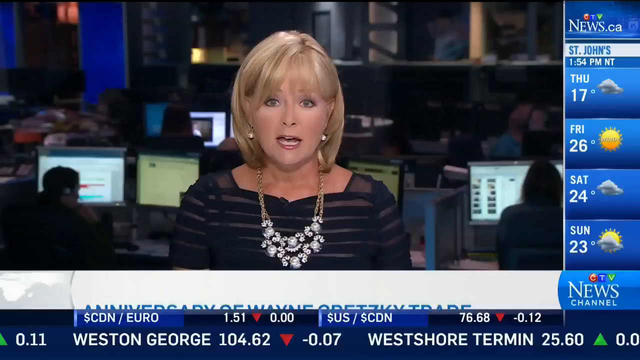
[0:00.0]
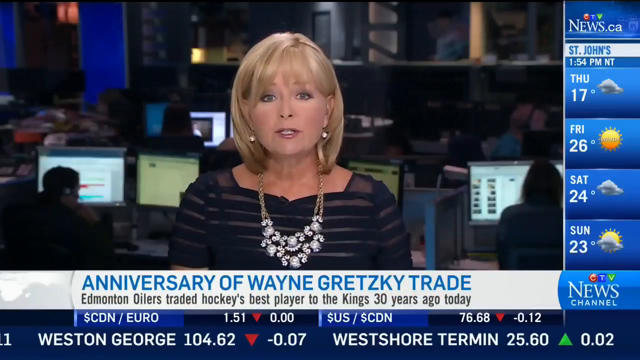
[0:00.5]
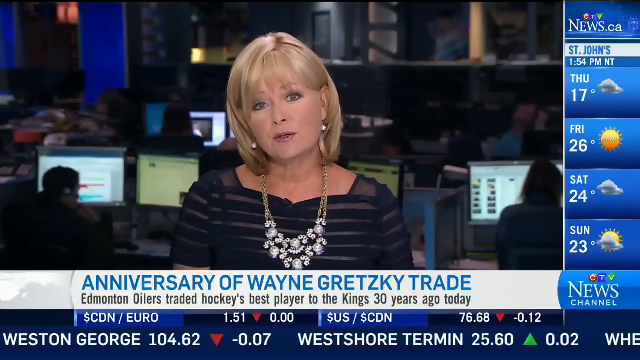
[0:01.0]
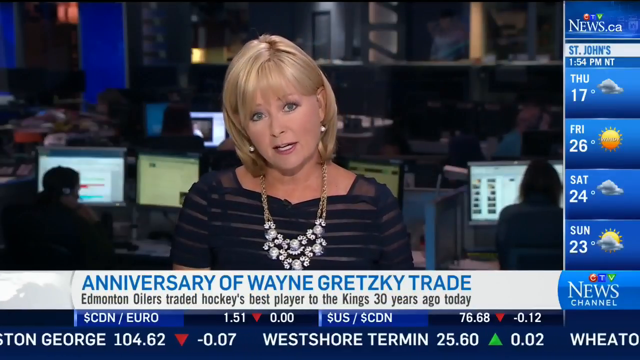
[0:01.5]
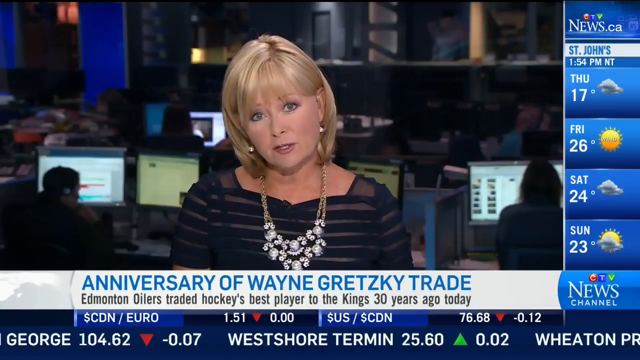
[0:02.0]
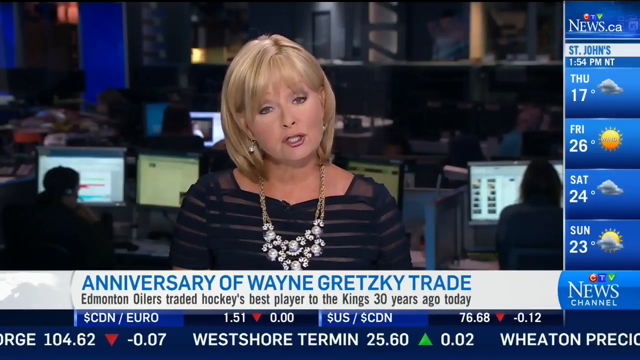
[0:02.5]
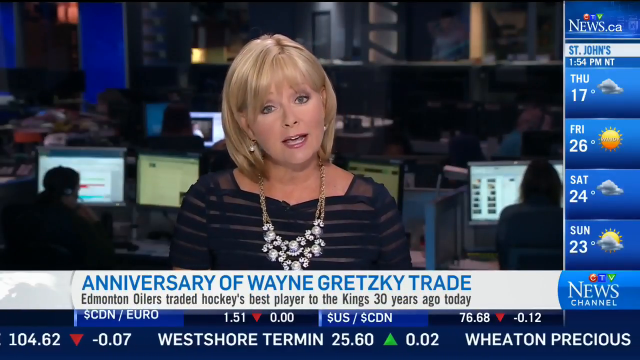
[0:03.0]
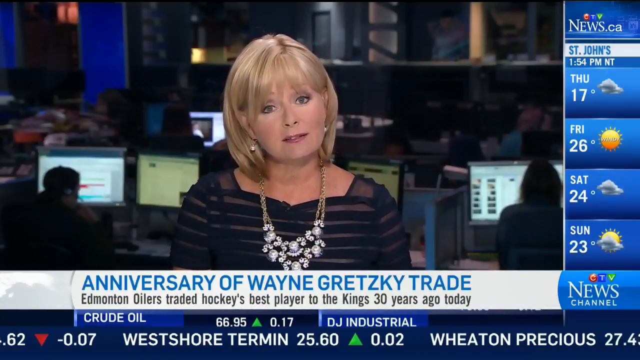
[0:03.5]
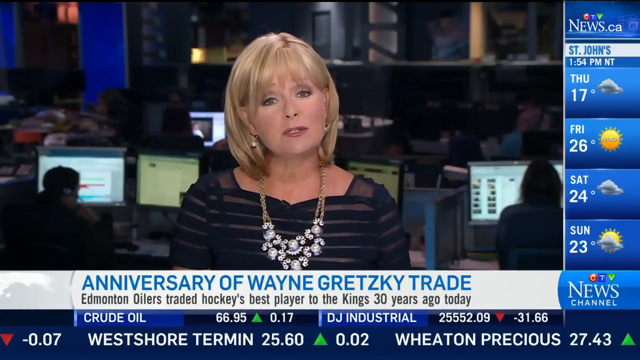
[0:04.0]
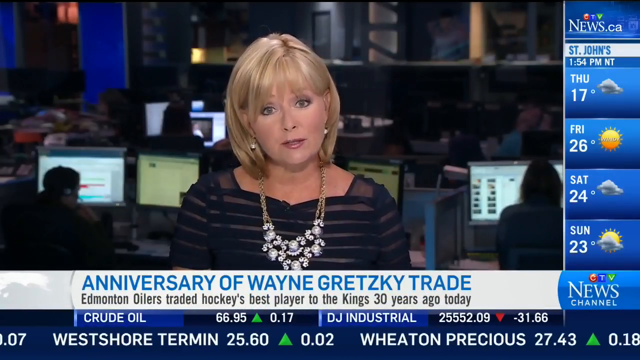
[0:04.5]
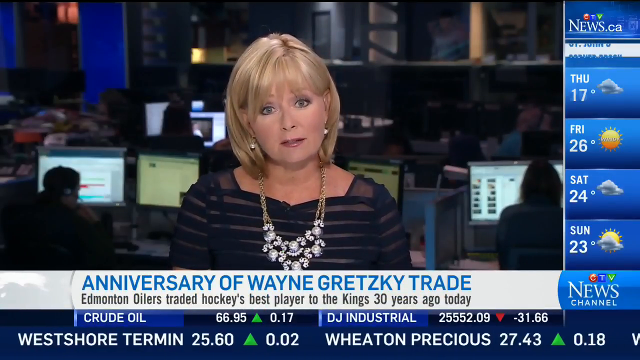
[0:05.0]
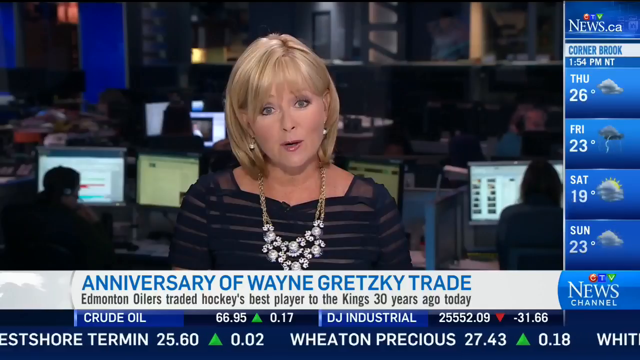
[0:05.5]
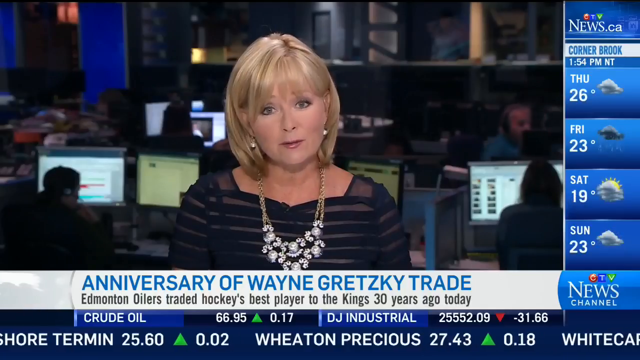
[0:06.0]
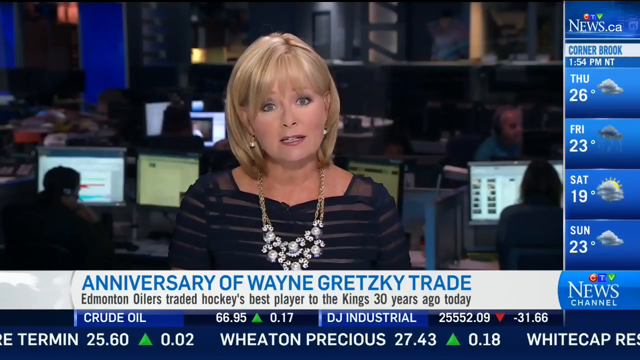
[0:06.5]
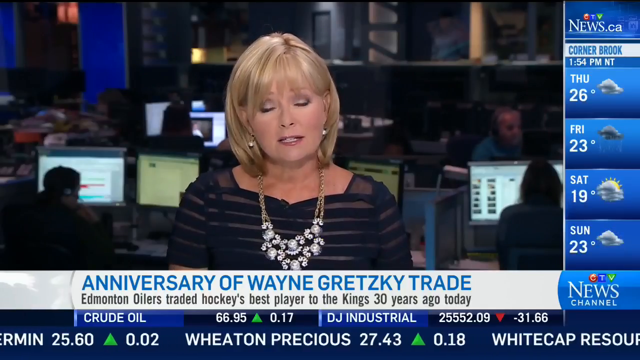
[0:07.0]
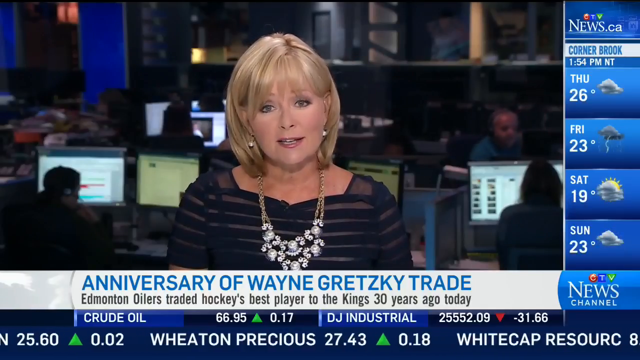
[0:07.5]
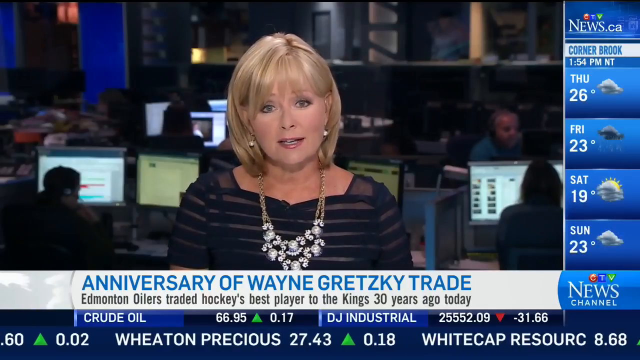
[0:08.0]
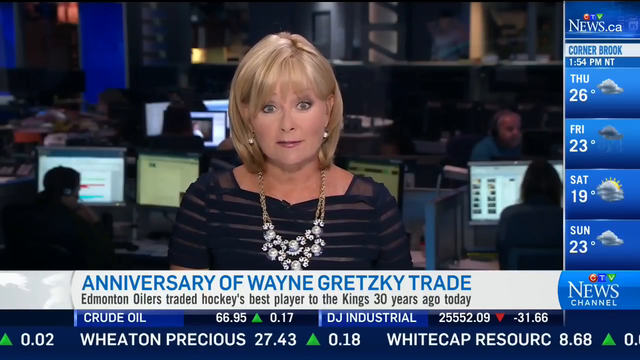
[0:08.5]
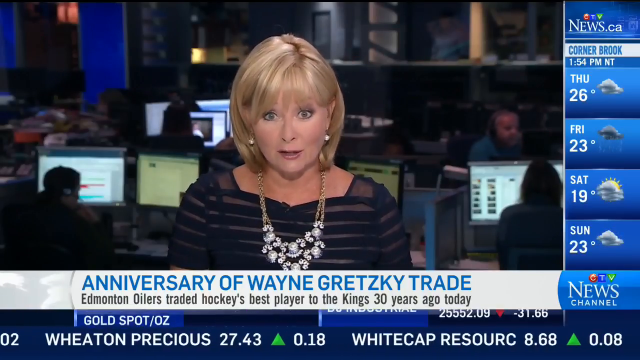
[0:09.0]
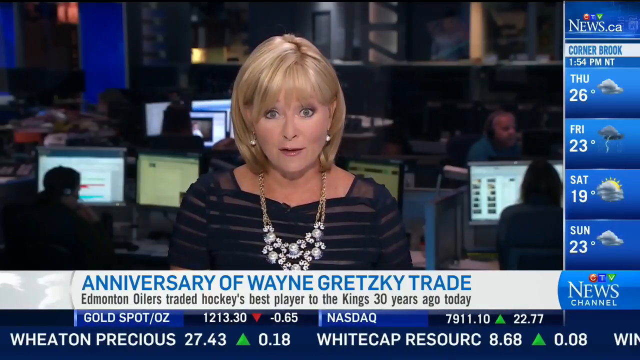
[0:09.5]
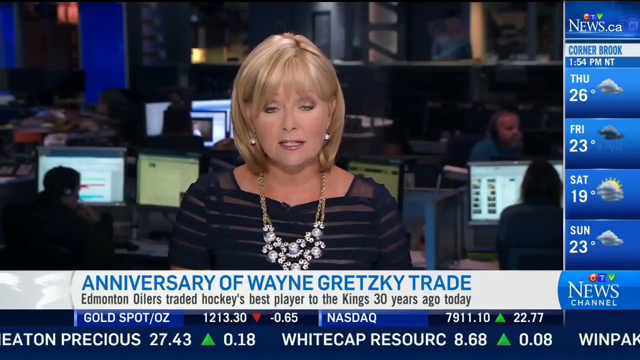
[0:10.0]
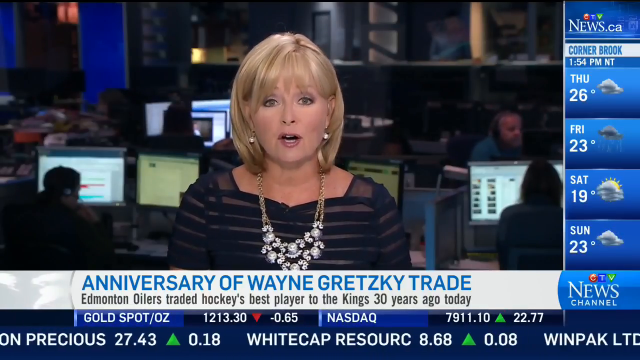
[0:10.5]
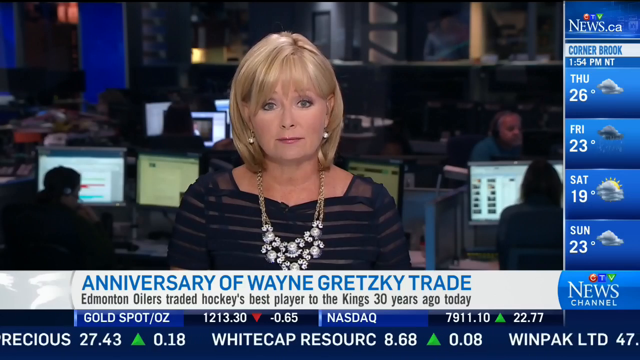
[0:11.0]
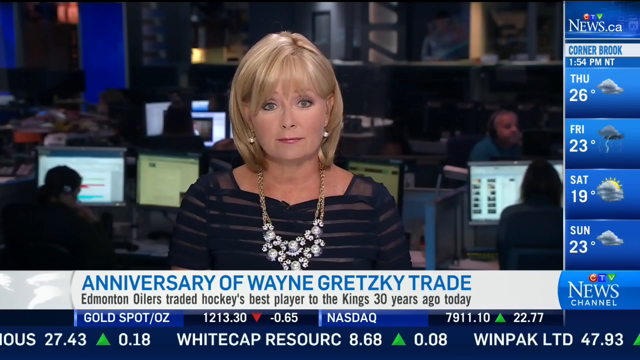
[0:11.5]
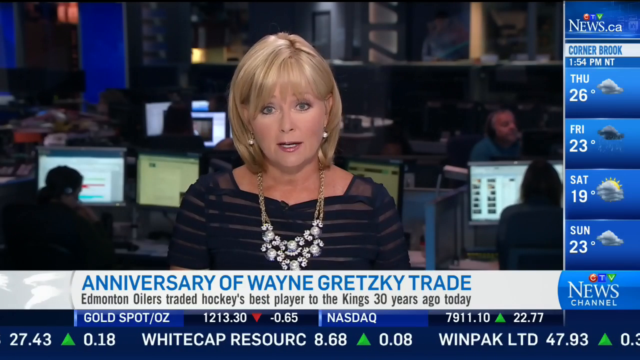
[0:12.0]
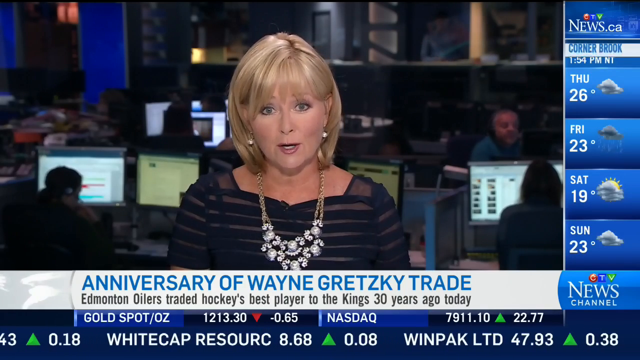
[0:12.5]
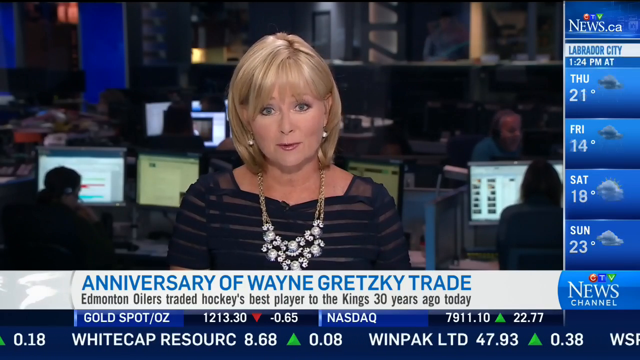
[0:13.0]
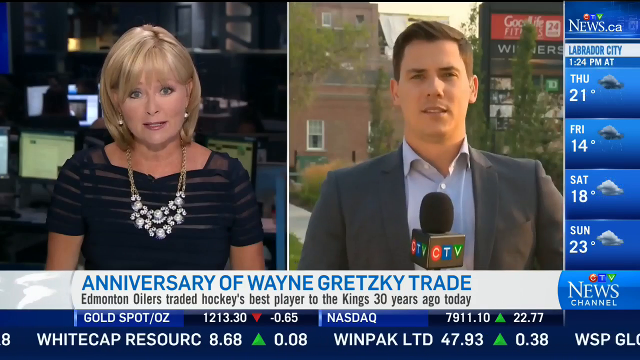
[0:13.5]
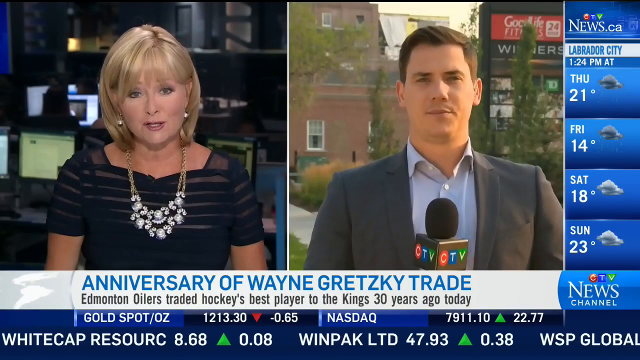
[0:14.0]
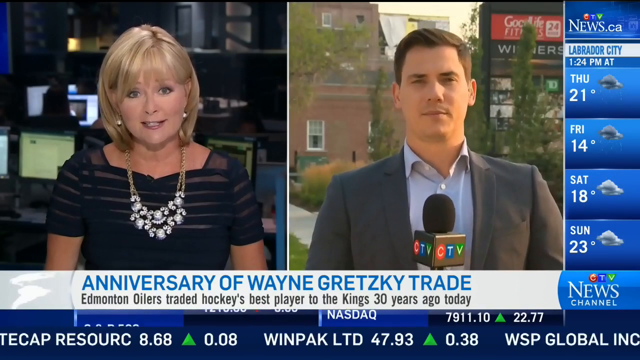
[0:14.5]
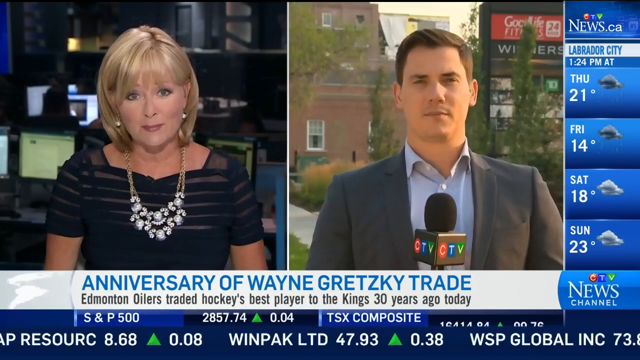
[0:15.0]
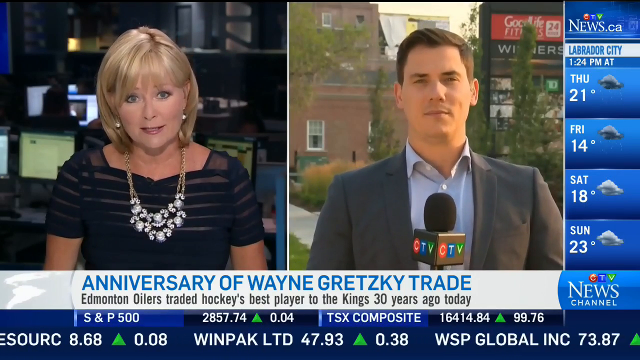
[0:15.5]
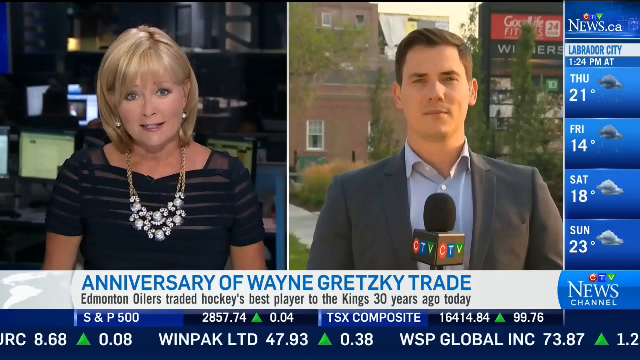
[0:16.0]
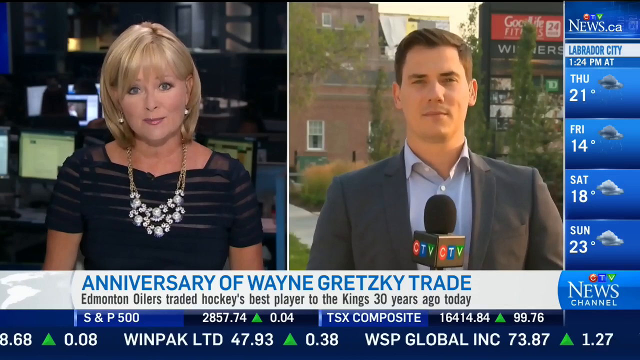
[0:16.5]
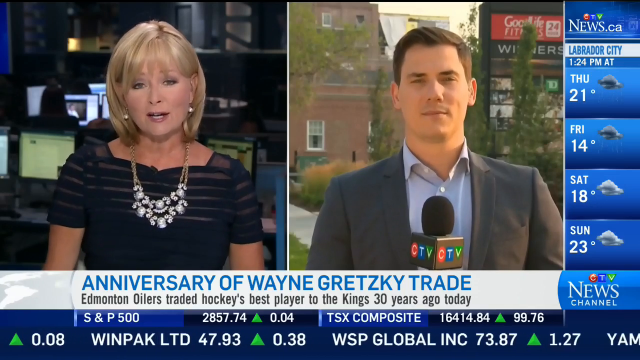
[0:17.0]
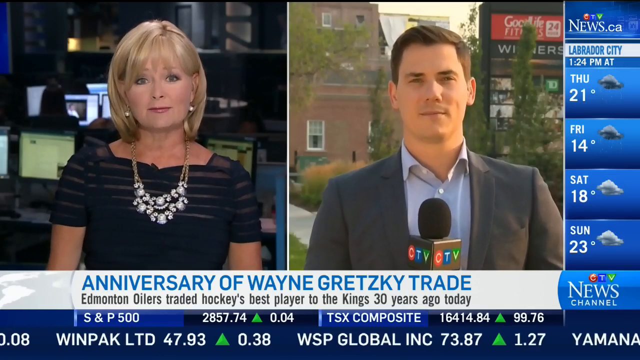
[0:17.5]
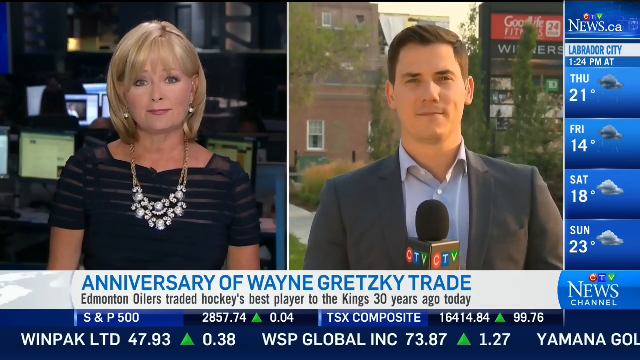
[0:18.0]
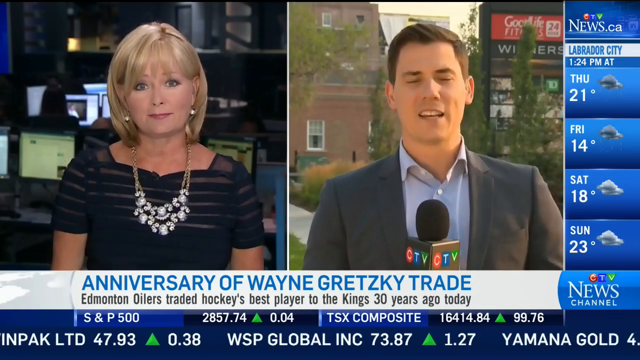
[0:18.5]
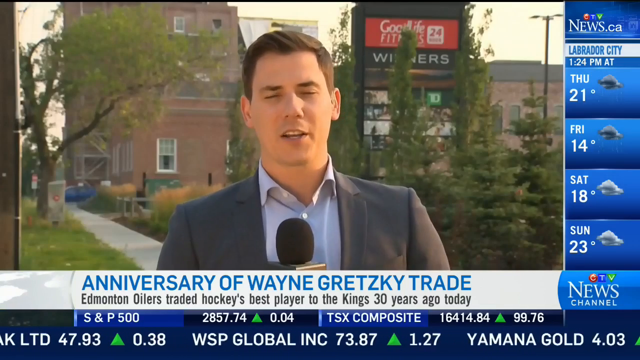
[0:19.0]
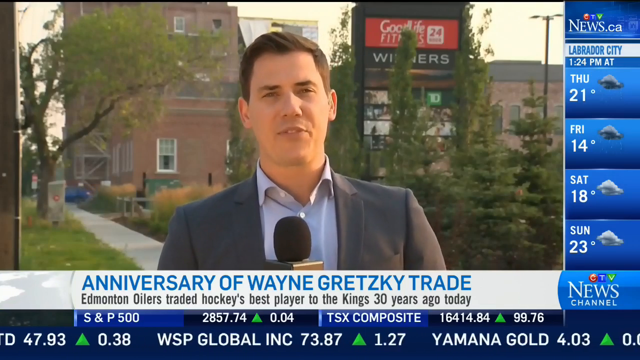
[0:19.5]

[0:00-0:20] A woman wears a very bedazzled-looking necklace, a gold chain with two layers that curve up somewhat like a horseshoe; it appears to have silver round items with what look like little diamonds in between. She also has dangling earrings that seem to match the necklace. She wears a black, somewhat semi-see-through striped long-sleeved shirt and appears to be standing in a newsroom giving a report. Weather is shown on the right side of the screen, and text at the bottom reads "the anniversary of Wayne Gretzky trade" along with "30 years ago today". People sit in the back looking at computers: a guy in the front row has a white screen with a couple of red and blue bars and wears a headset, to her right someone is looking through a bunch of thumbnails, and a guy in the second row in a blue shirt with headphones is turned somewhat toward the camera. The view then becomes a split screen with another correspondent, a man standing outside. "good life fitness" is visible on a marquee, along with what looks like "winners". He holds a CTV mic, and the camera briefly zooms to him.